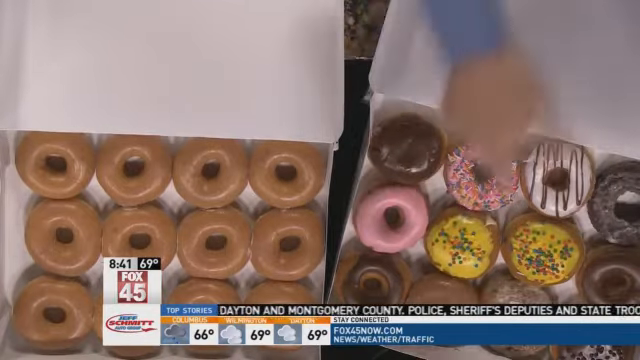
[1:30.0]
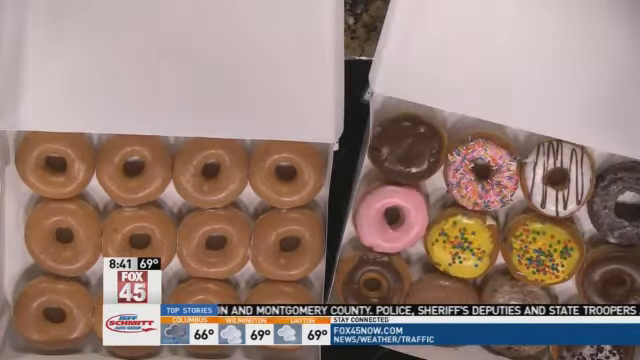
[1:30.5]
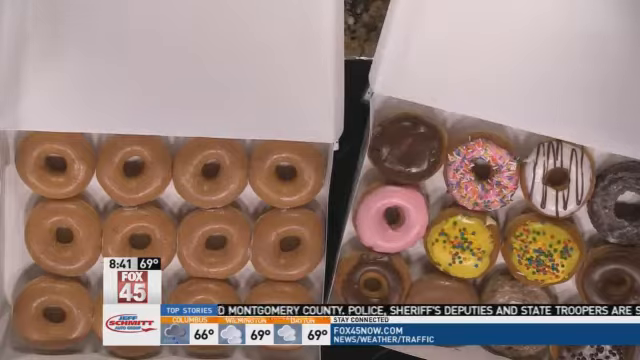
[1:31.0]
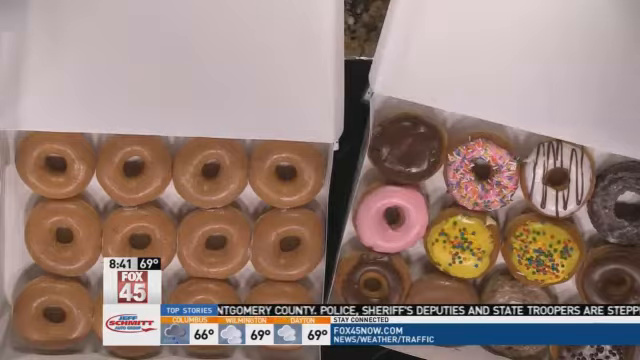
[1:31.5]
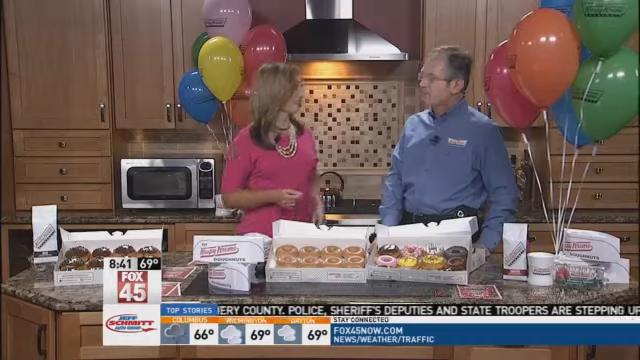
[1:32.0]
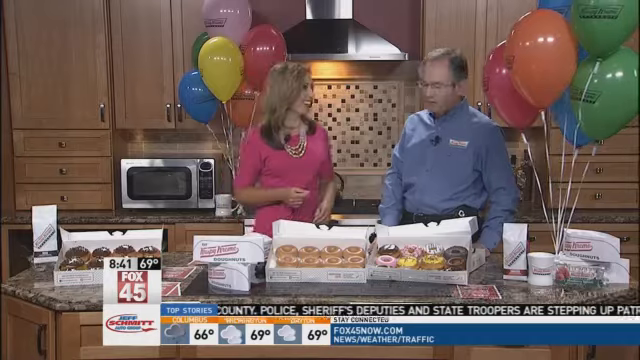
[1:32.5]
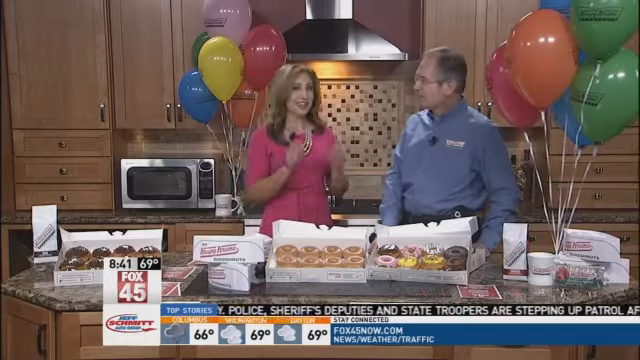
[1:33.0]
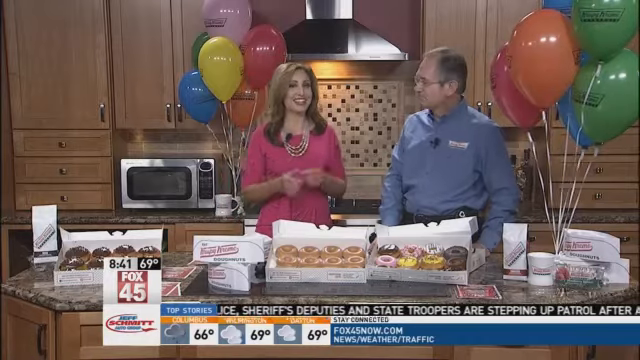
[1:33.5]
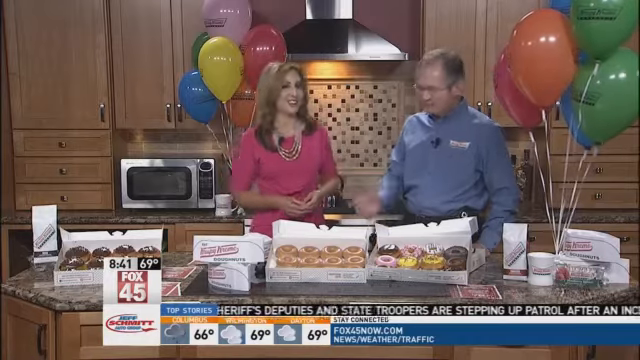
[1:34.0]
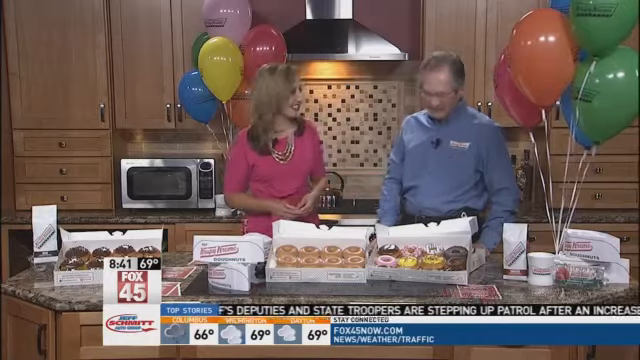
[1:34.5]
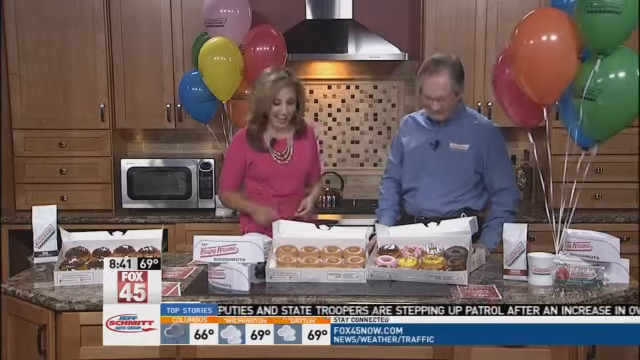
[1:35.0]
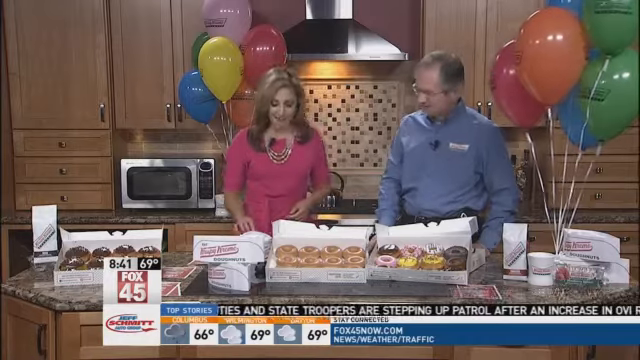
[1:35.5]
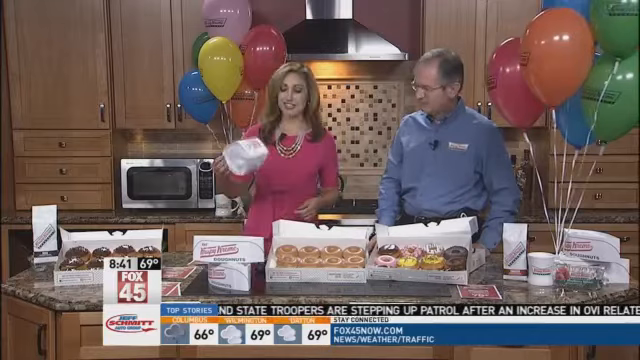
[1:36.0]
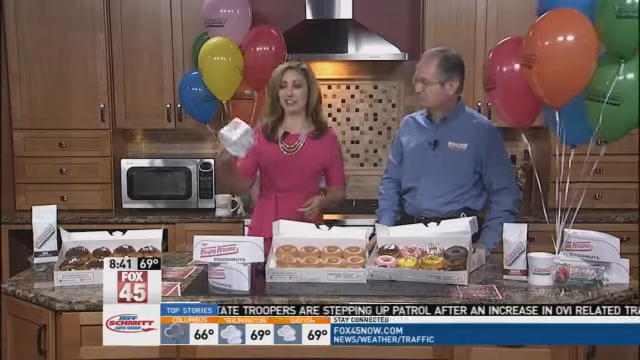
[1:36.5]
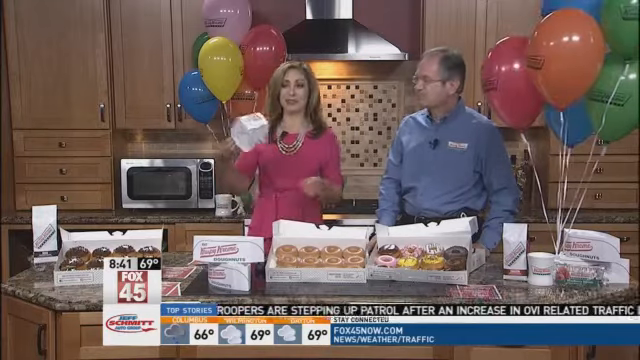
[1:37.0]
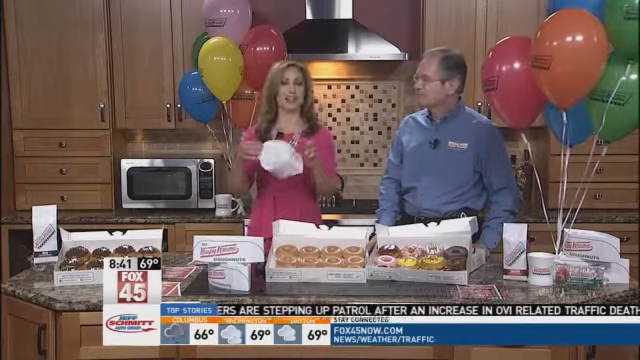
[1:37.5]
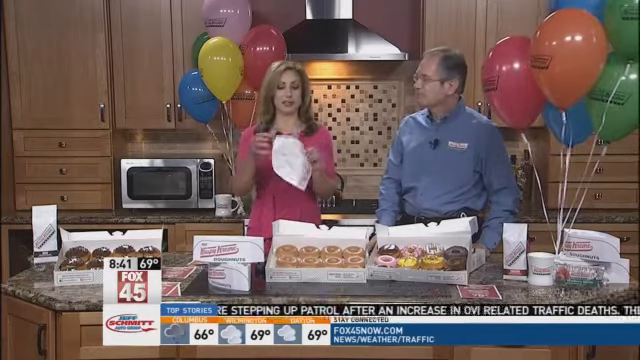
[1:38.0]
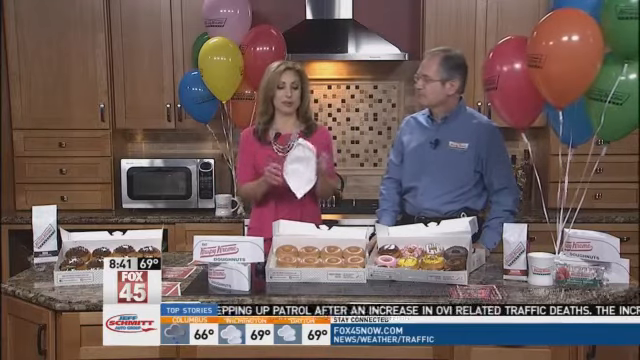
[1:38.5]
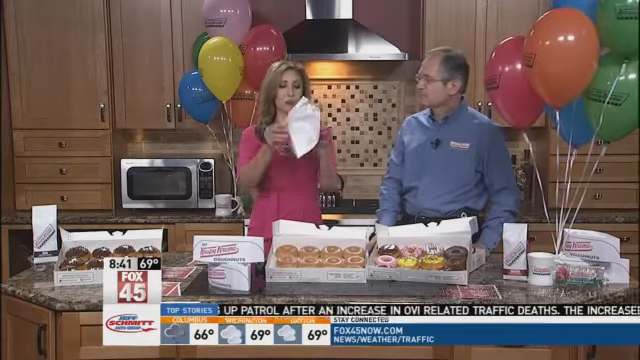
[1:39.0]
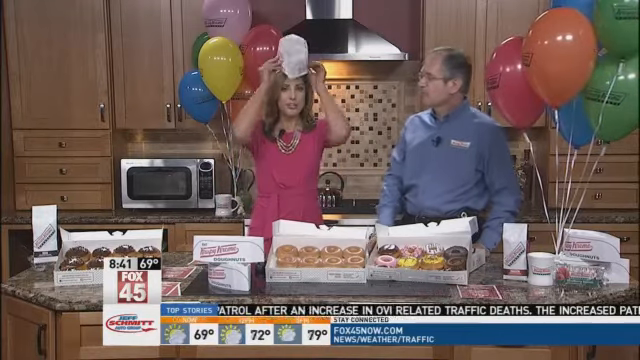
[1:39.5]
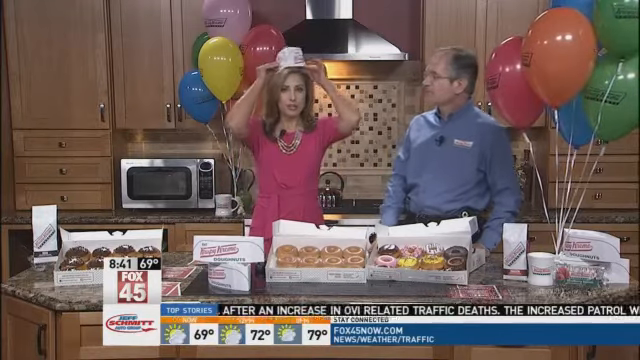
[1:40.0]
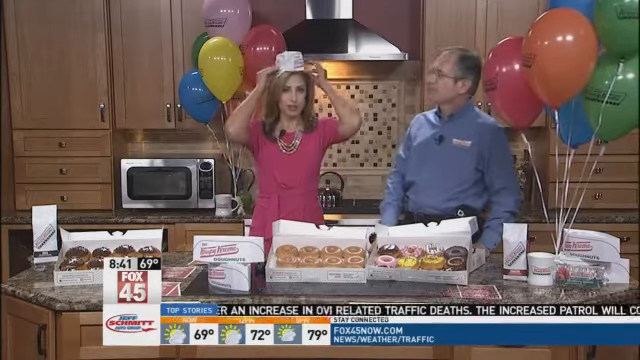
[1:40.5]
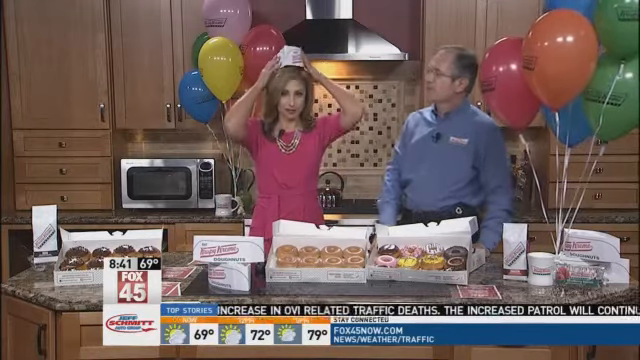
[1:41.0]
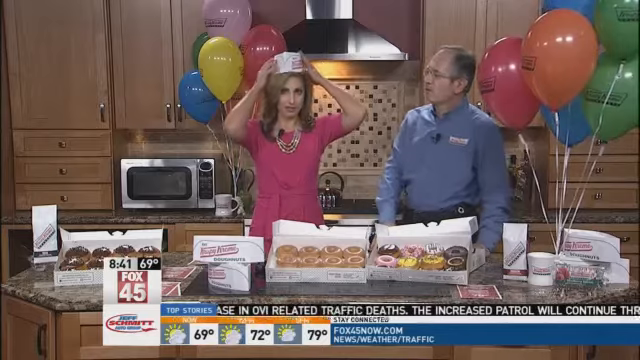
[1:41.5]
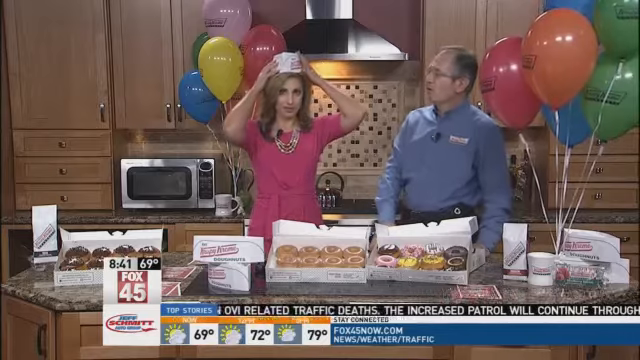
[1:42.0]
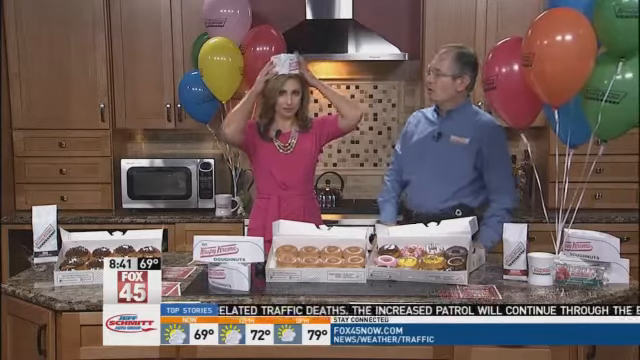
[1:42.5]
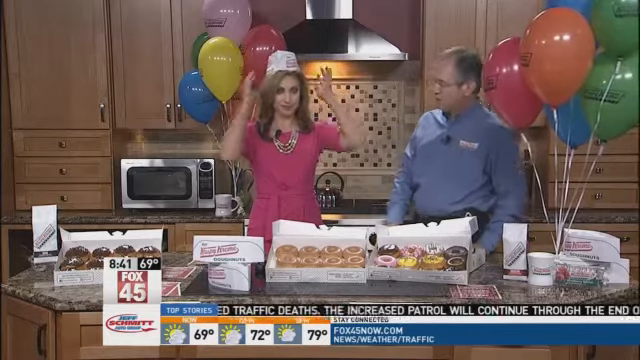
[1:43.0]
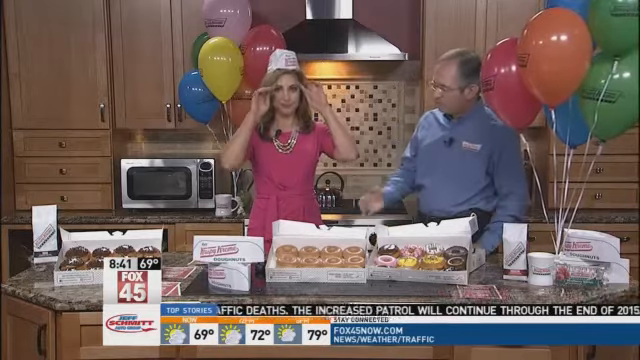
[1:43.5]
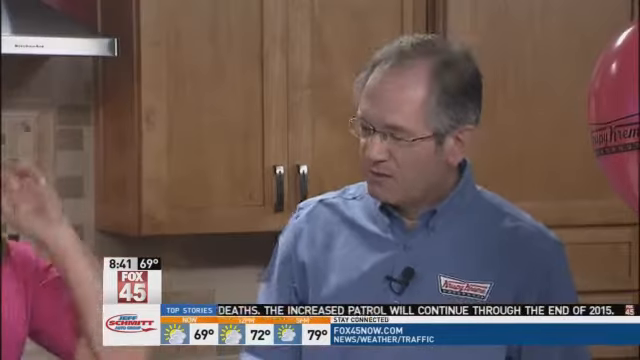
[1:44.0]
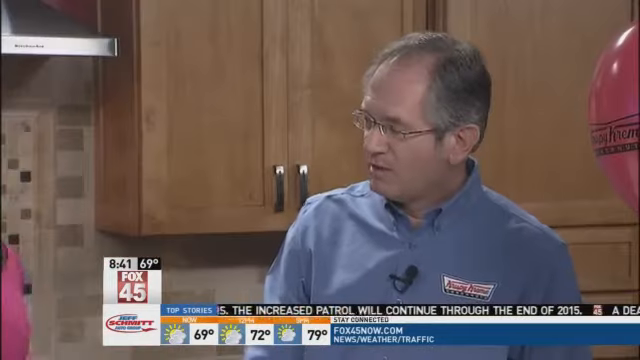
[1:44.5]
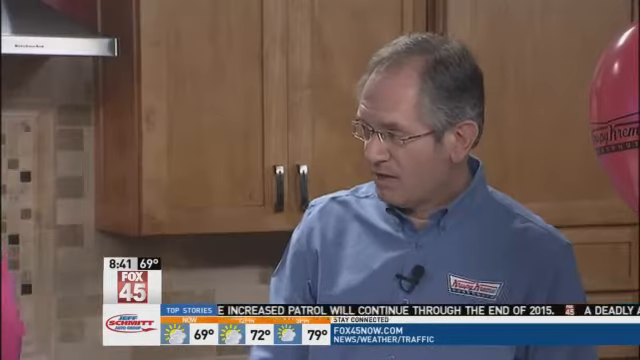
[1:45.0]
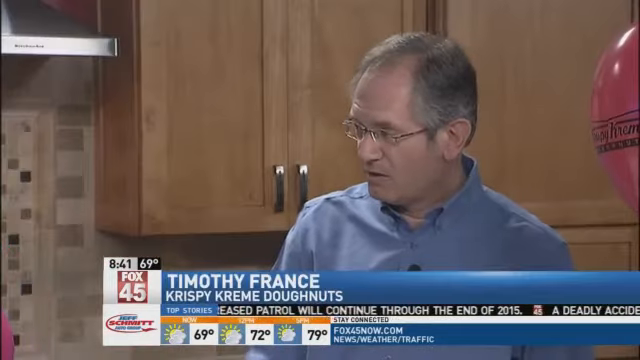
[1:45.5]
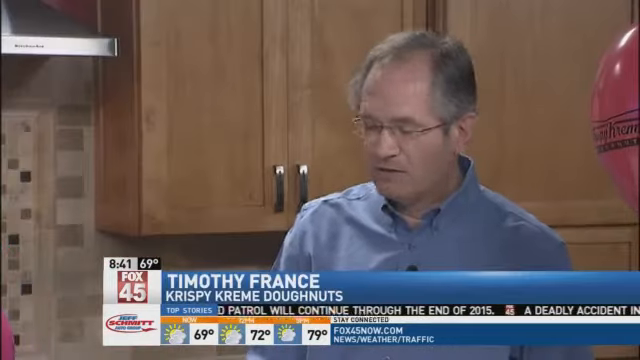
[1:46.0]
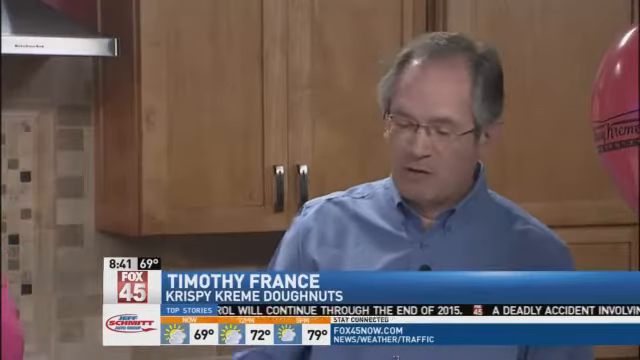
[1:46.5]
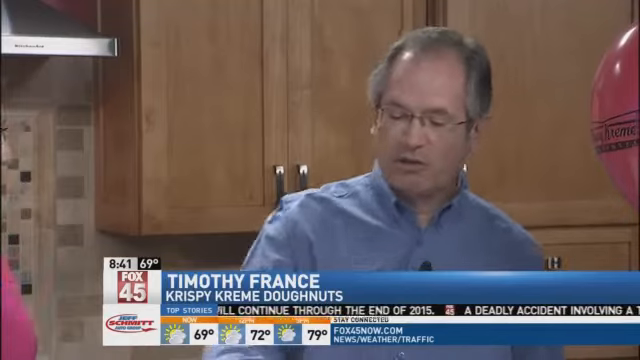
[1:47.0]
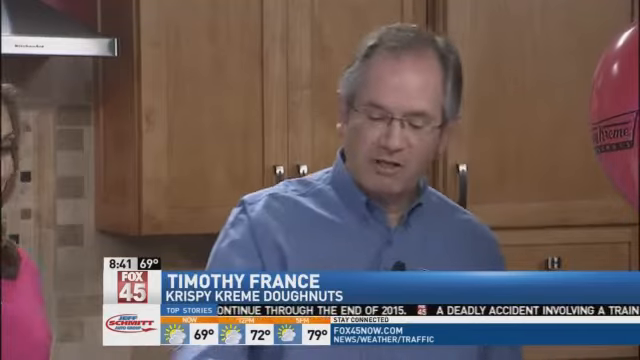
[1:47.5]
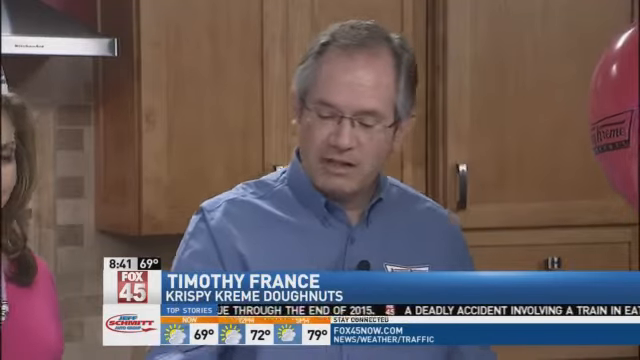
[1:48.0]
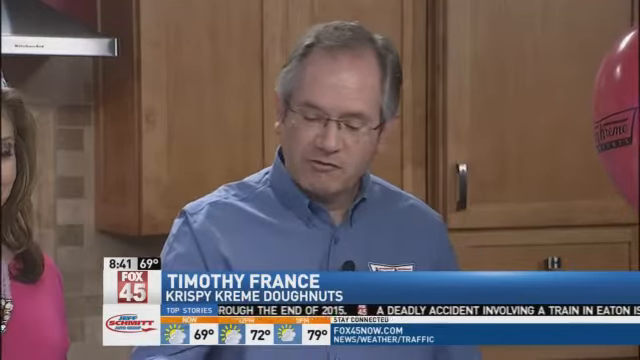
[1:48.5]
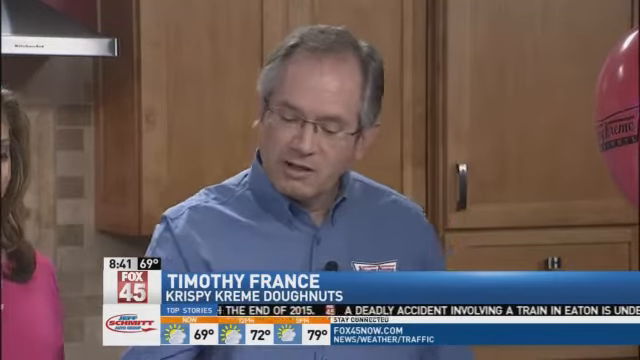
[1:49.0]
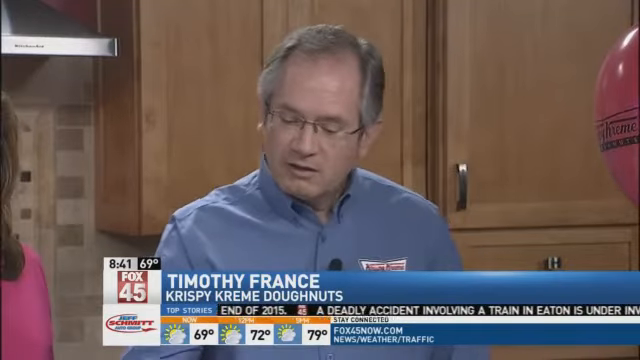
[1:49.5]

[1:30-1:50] The camera angle switches back to the reporter and the representative. She laughs and puts both pointer fingers kind of in the air and down, then, looking at the camera, clasps her hands kind of in front of her stomach. She picks up a Krispy Kreme Donuts paper hat and gently places it on top of her head, but her hair is so voluminous that it does not fully go on. The man talks to her, still not making much eye contact, seemingly explaining the donuts. Although he looks introverted, he seems to talk in a focused way about donuts. When he talks, his bottom lip kind of protrudes a little, making him look a little pouty.